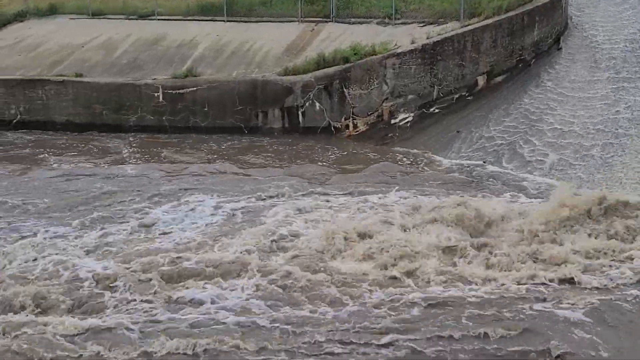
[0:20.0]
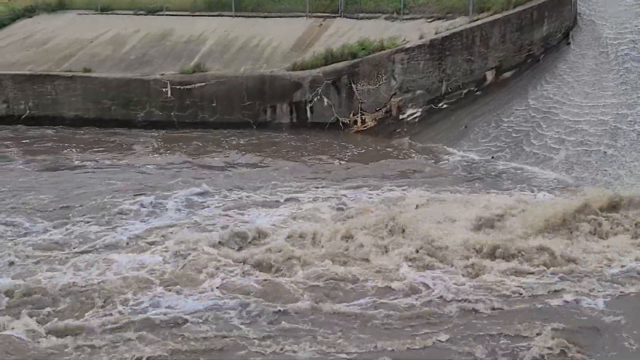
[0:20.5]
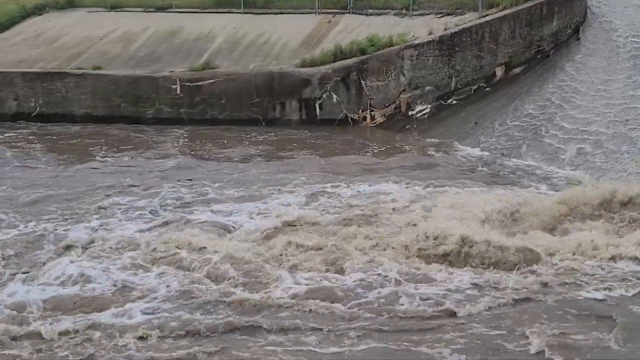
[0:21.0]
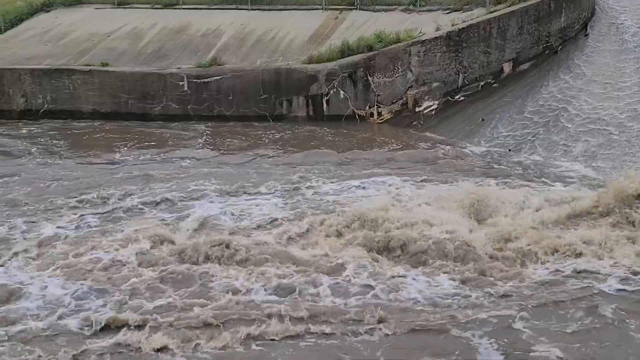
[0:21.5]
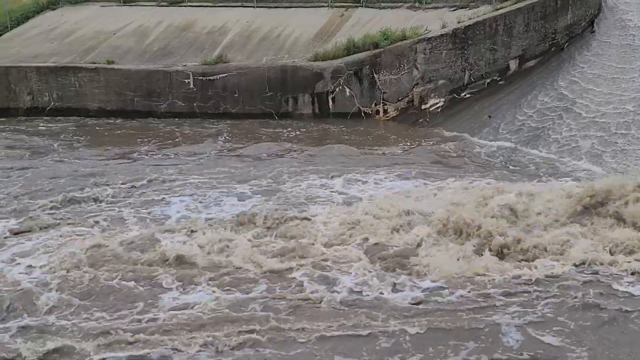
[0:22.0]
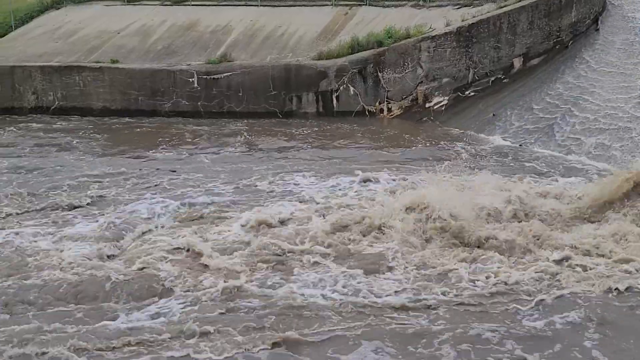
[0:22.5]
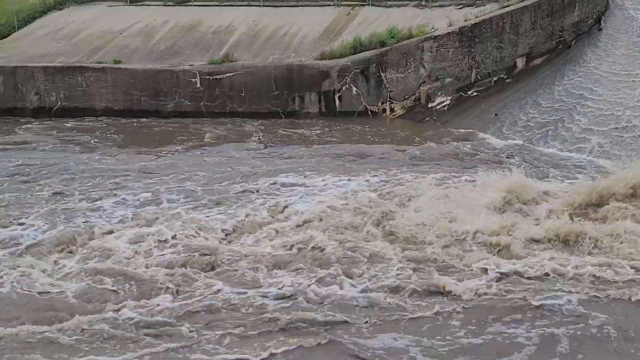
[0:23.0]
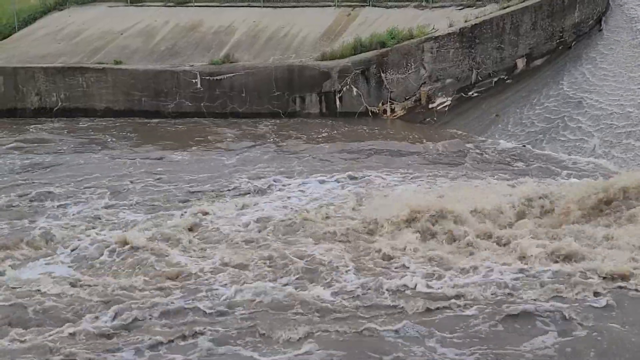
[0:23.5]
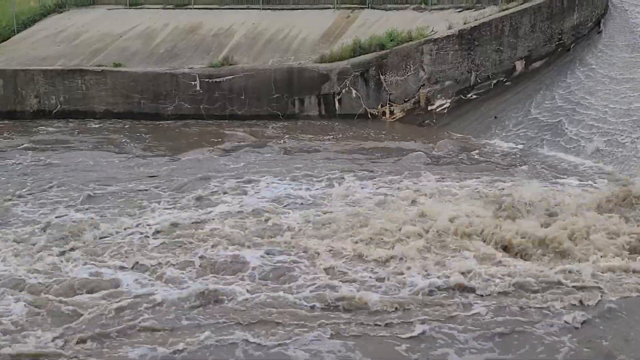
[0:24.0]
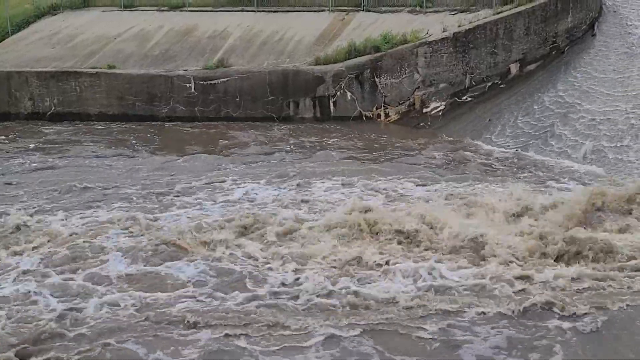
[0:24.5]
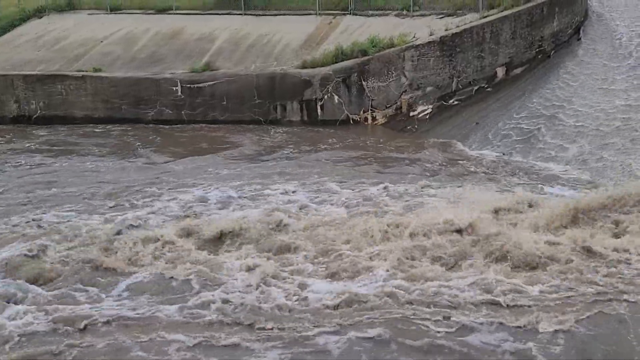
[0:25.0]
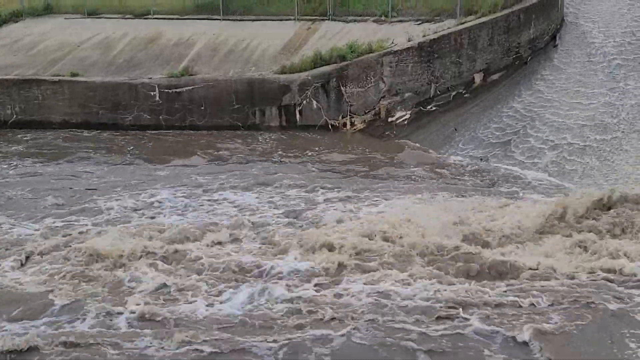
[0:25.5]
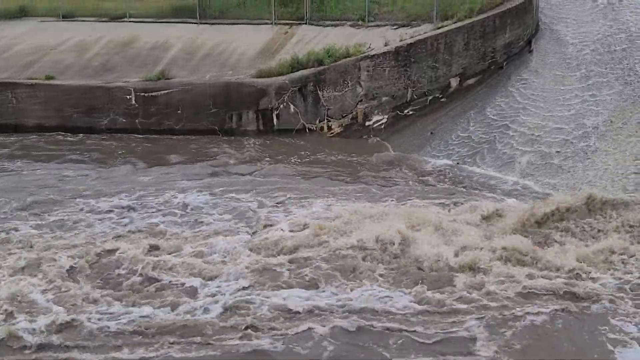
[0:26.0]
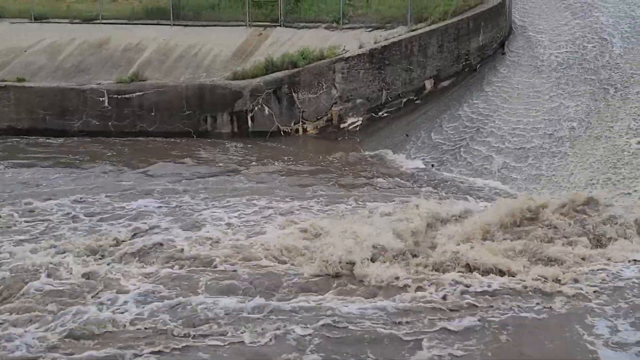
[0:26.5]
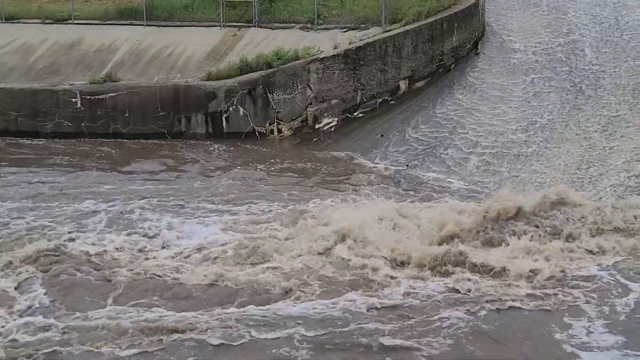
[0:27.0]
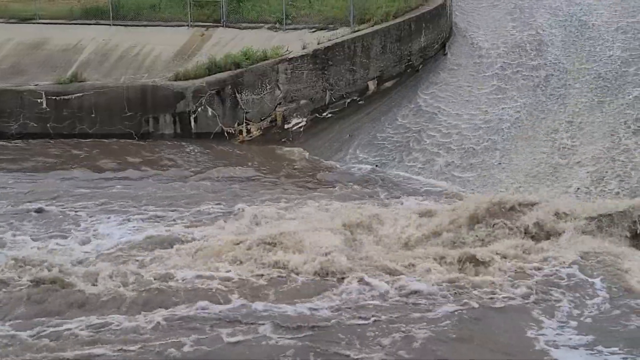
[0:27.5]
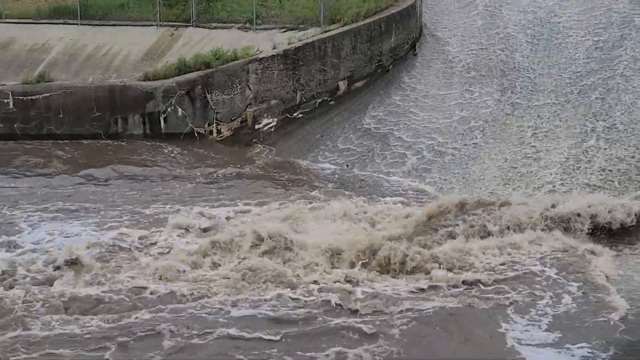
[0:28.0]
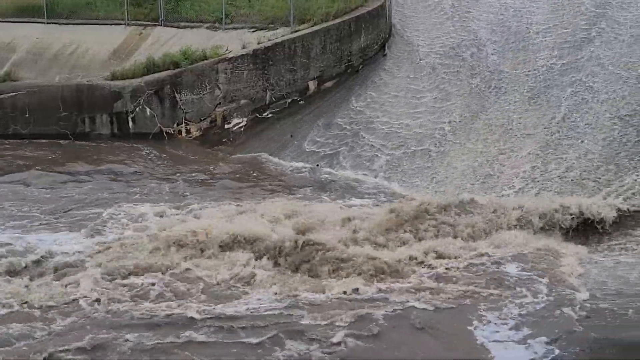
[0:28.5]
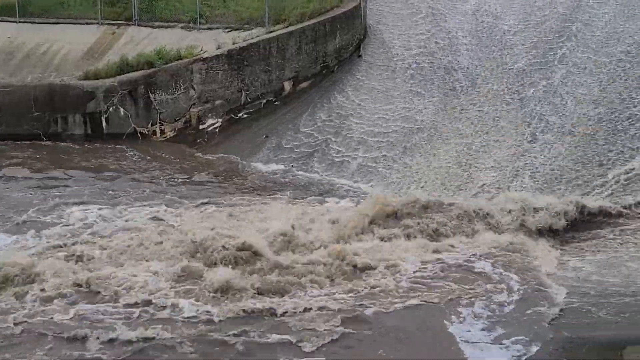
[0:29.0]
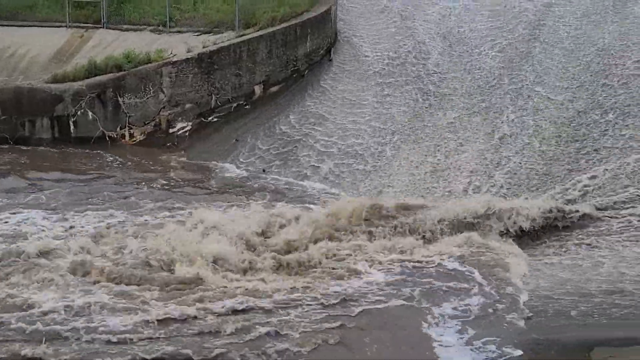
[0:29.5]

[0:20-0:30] More water appears to cover the surface as it keeps coming down from the curved area and flowing into the surface below. The sky is very cloudy, with no real sunshine on the water. Some grass is visible above the body of water.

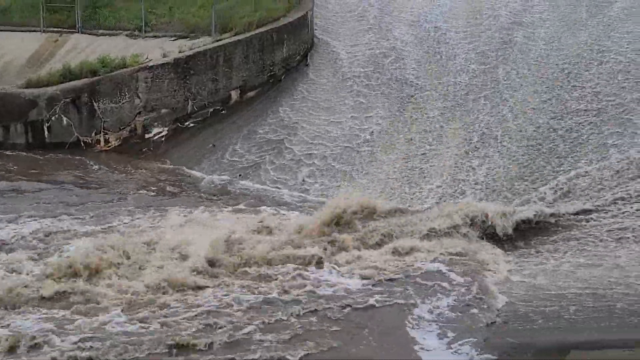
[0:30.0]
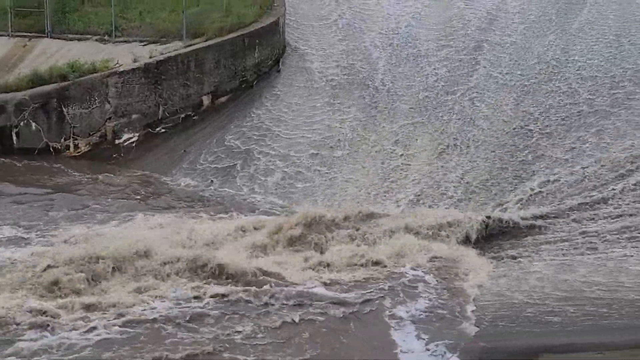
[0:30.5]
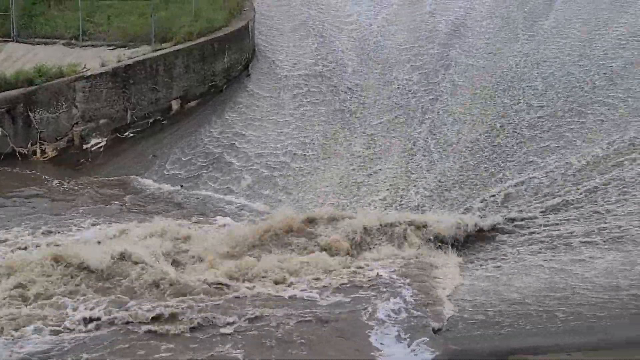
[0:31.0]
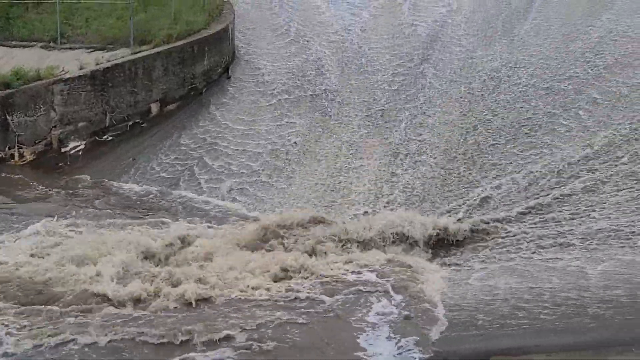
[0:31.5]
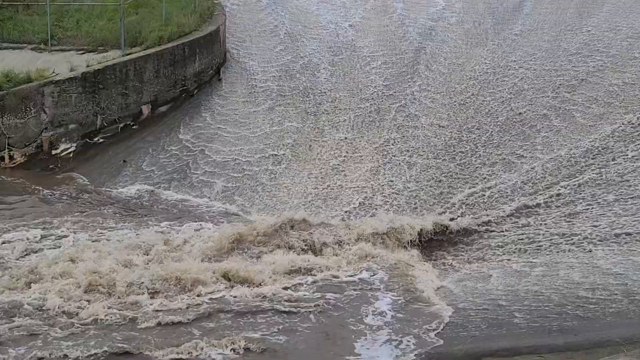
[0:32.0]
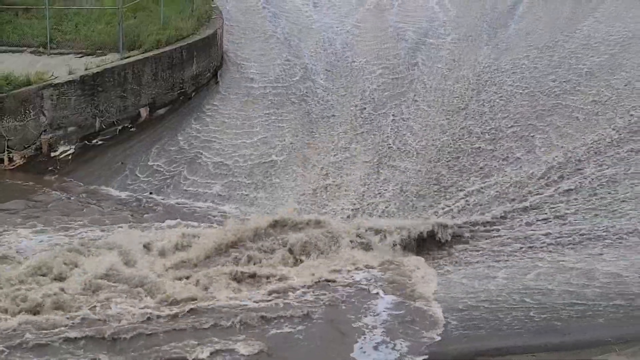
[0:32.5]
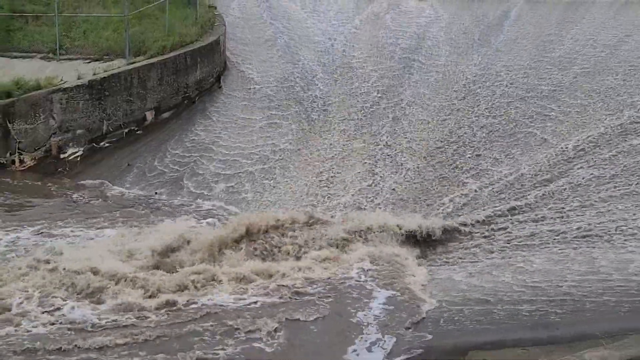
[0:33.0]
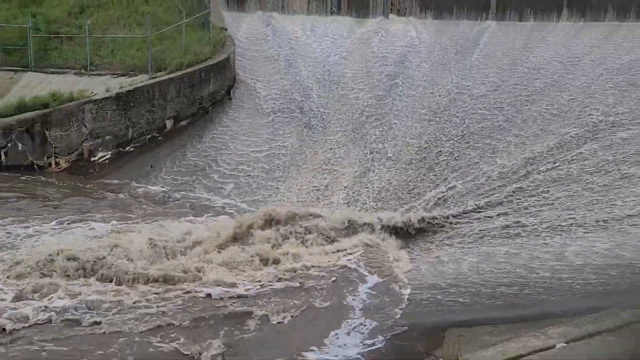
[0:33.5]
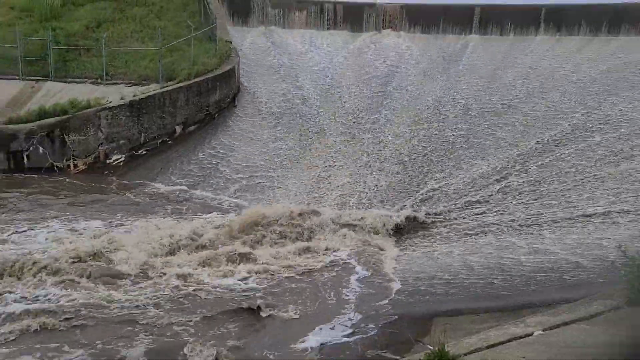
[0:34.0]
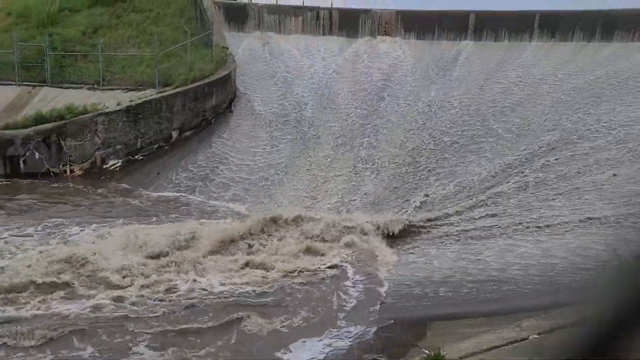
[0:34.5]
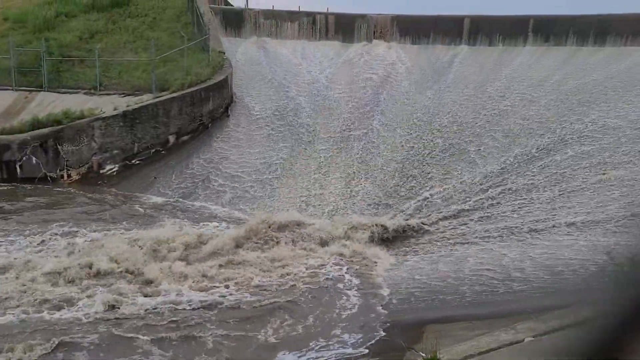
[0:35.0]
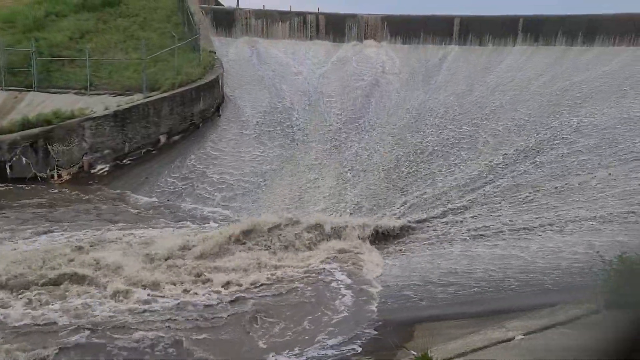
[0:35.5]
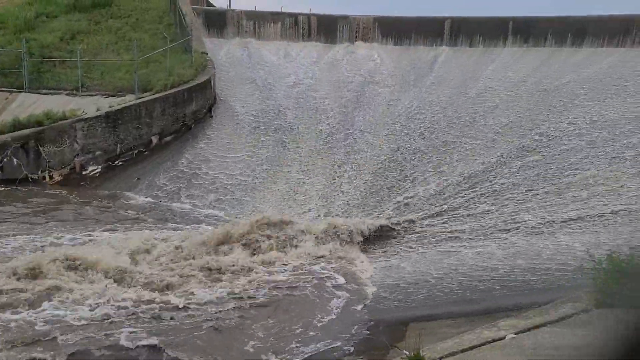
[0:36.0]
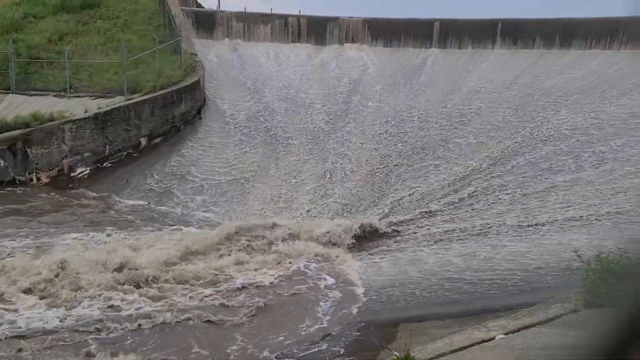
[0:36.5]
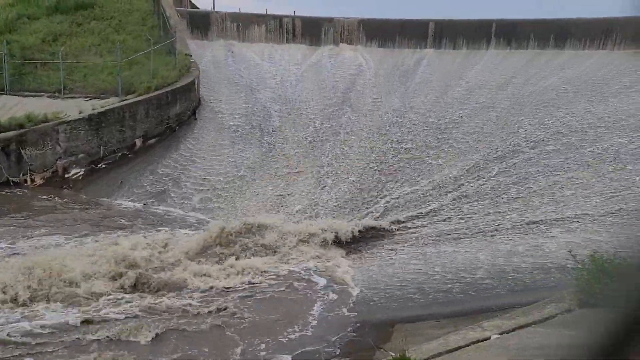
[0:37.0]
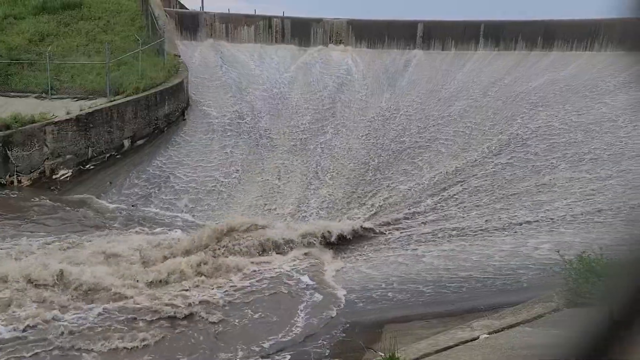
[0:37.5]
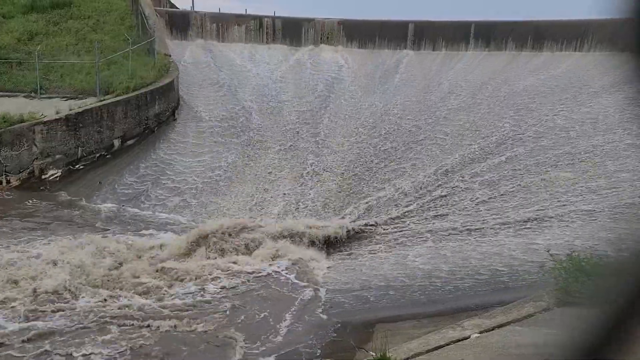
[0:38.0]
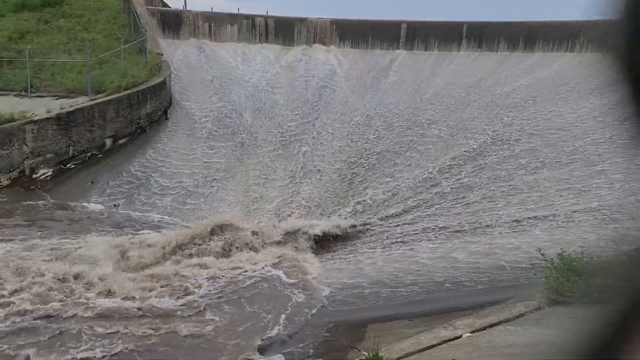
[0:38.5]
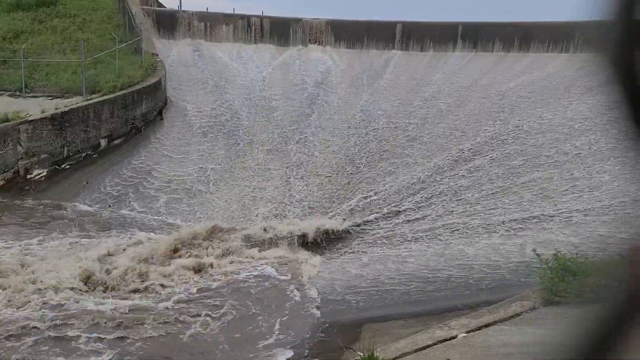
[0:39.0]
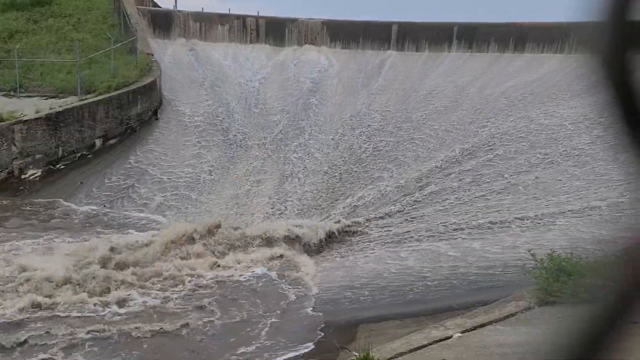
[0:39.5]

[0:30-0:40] The same body of water continues to clash at one center point, and a bit more detail in the water is visible. The video quality is not very good; the lens appears to be getting some water on it, making the image look foggy, possibly because the camera got too close to the water. The water makes a mini arc into the main pool of water.